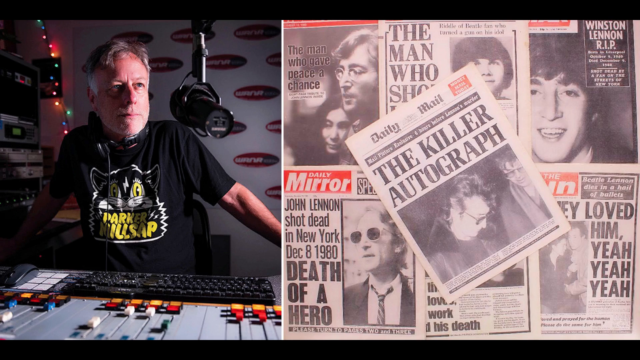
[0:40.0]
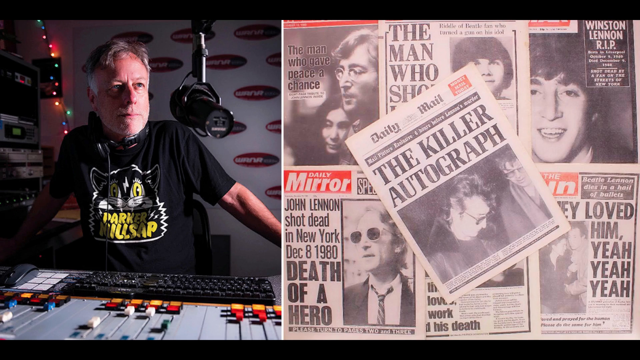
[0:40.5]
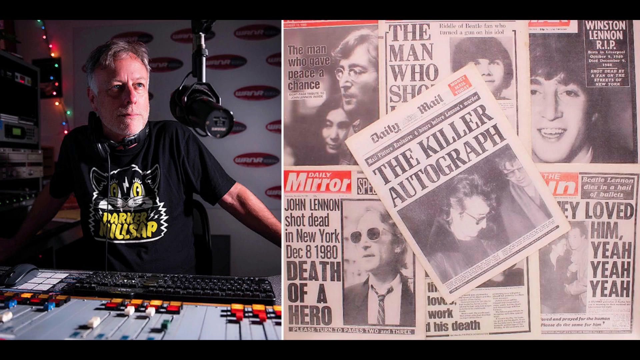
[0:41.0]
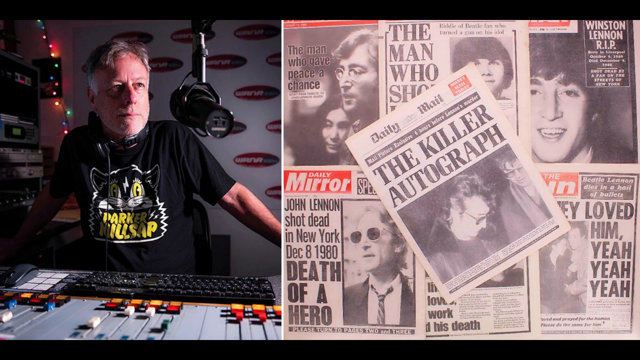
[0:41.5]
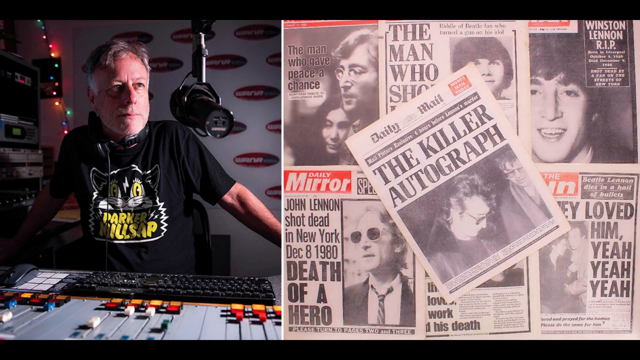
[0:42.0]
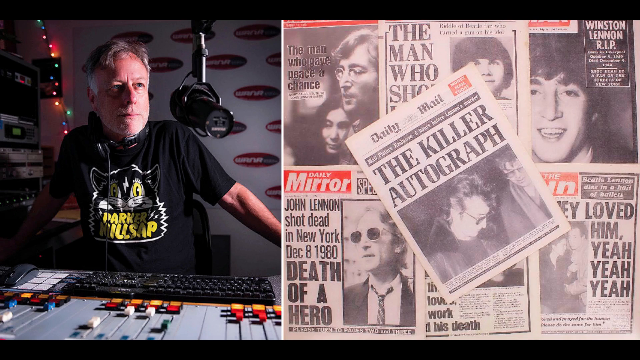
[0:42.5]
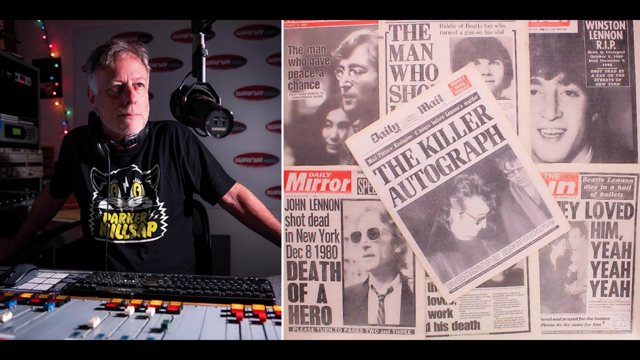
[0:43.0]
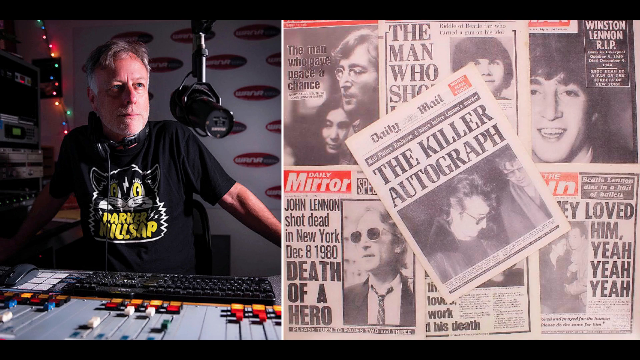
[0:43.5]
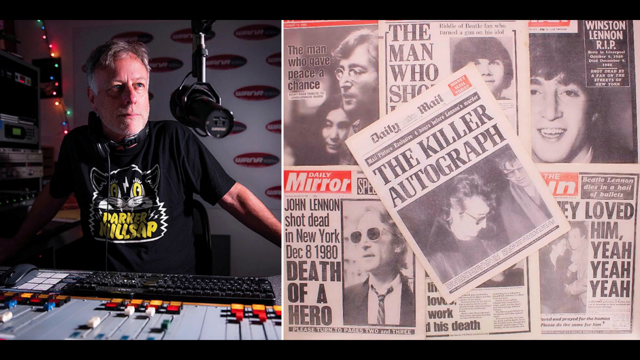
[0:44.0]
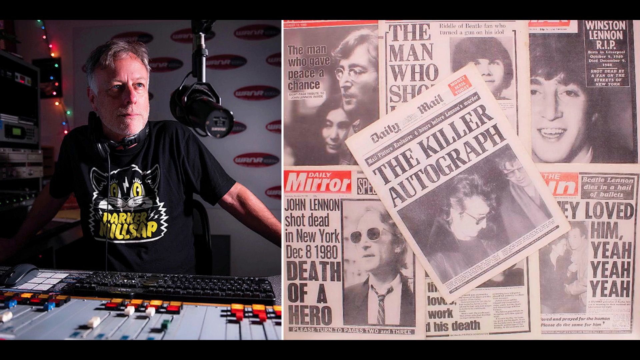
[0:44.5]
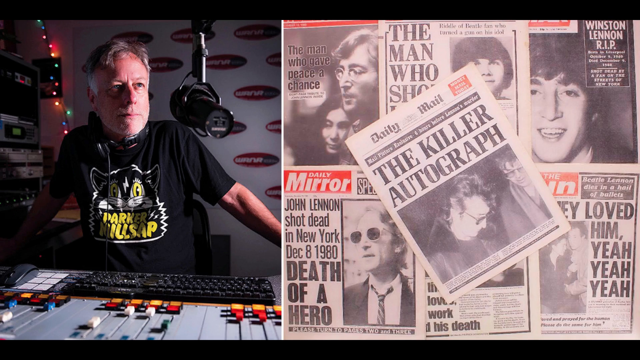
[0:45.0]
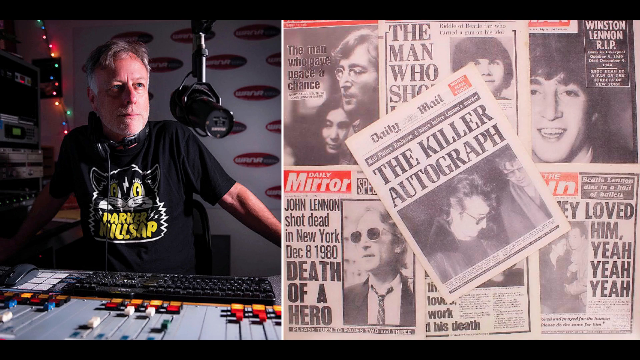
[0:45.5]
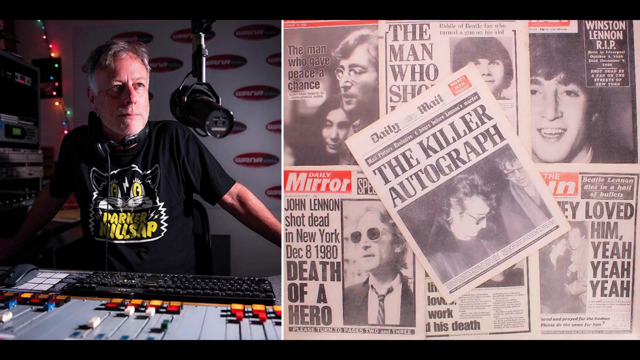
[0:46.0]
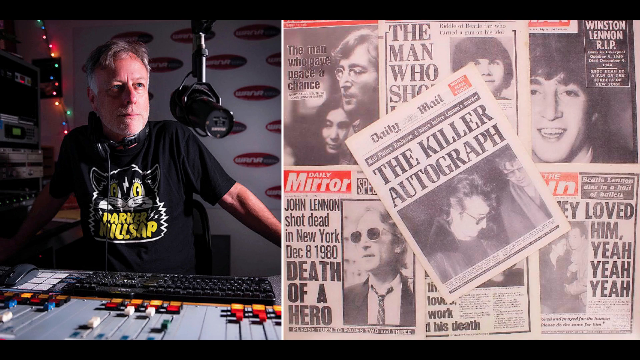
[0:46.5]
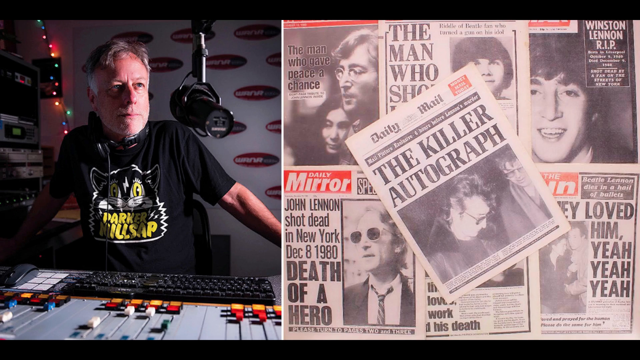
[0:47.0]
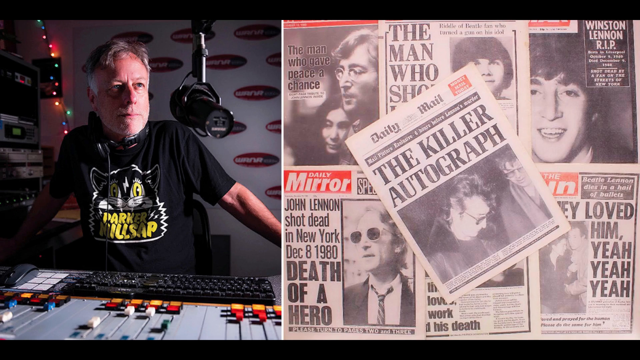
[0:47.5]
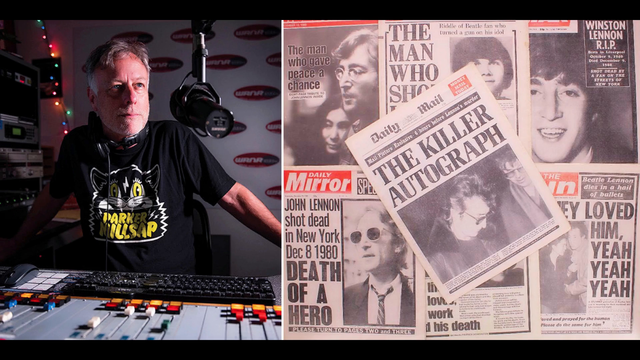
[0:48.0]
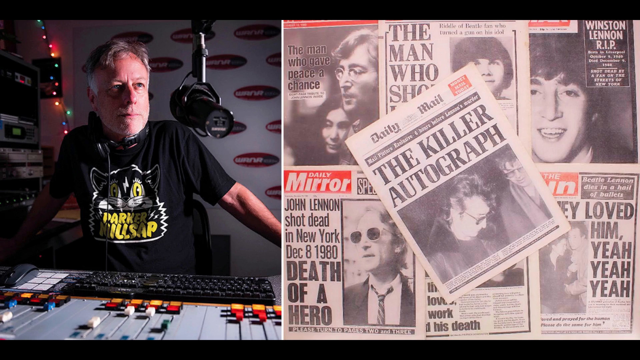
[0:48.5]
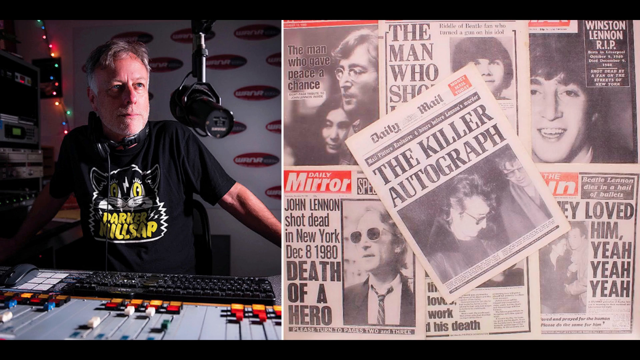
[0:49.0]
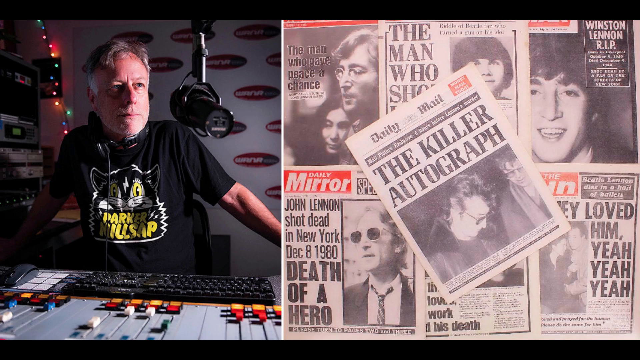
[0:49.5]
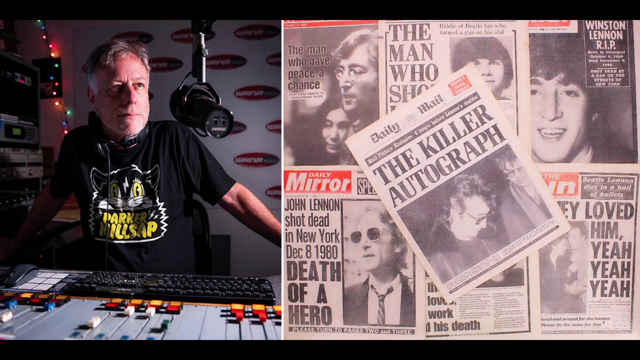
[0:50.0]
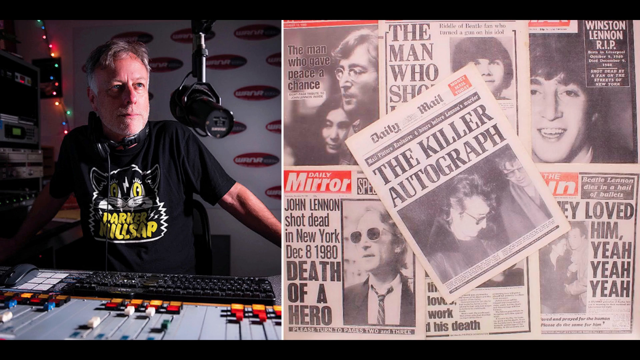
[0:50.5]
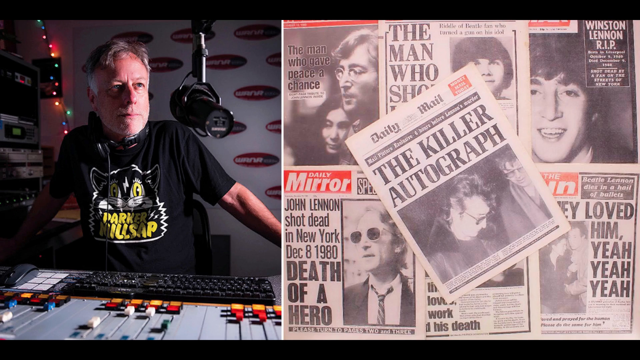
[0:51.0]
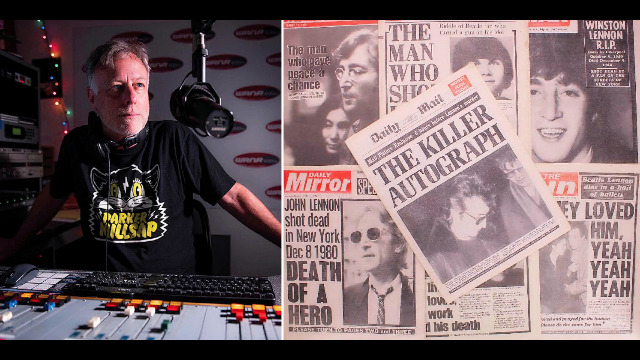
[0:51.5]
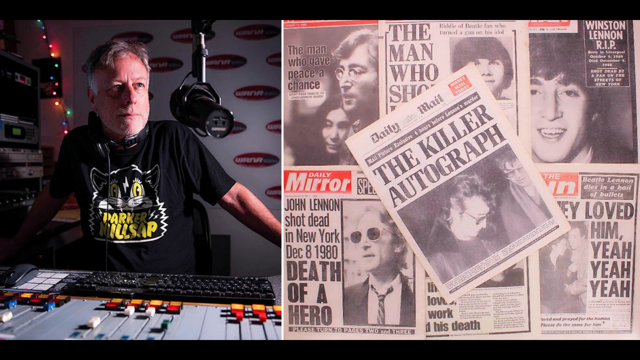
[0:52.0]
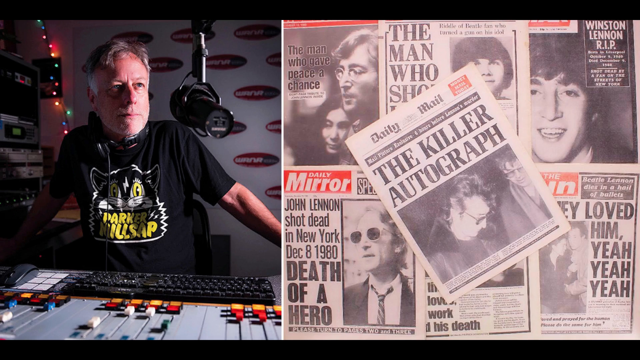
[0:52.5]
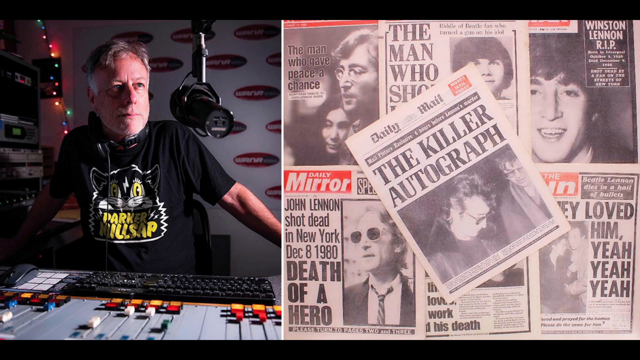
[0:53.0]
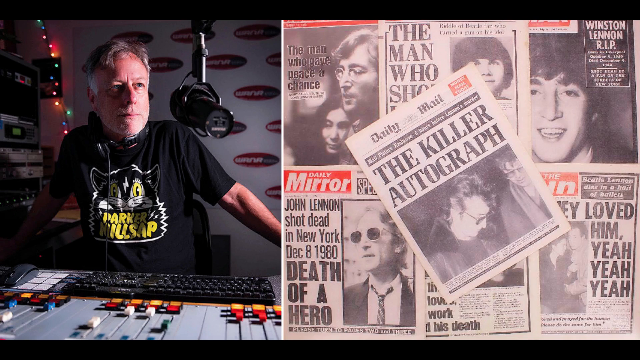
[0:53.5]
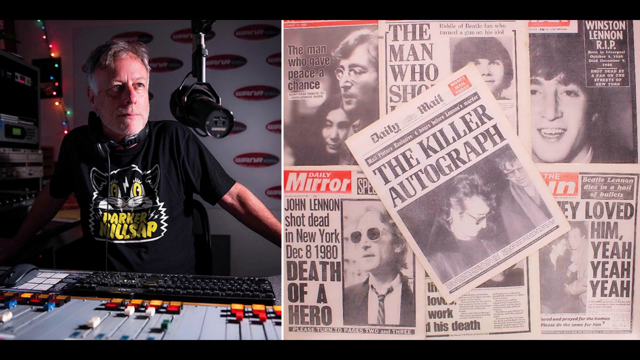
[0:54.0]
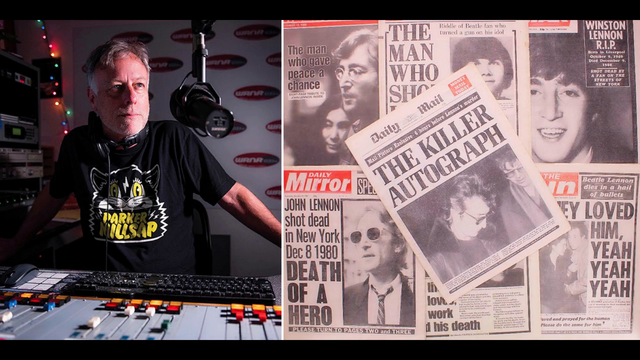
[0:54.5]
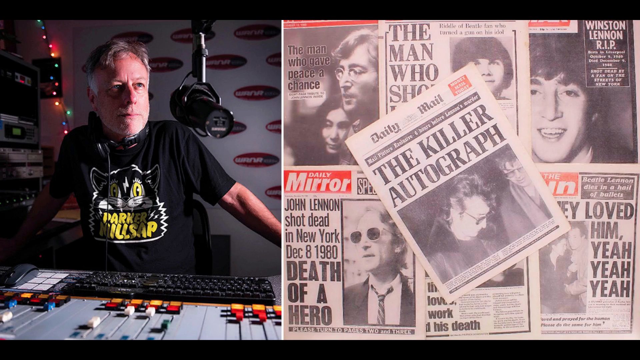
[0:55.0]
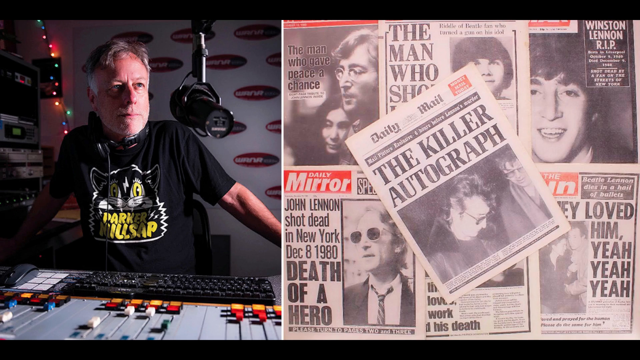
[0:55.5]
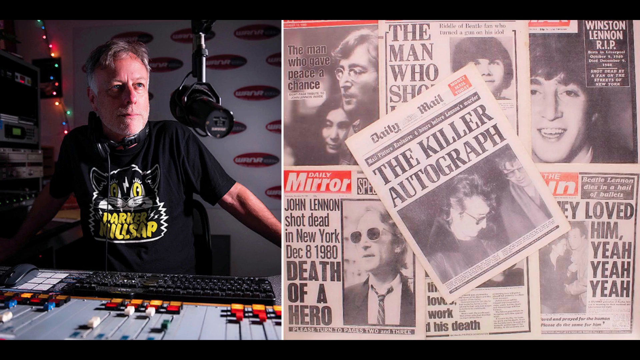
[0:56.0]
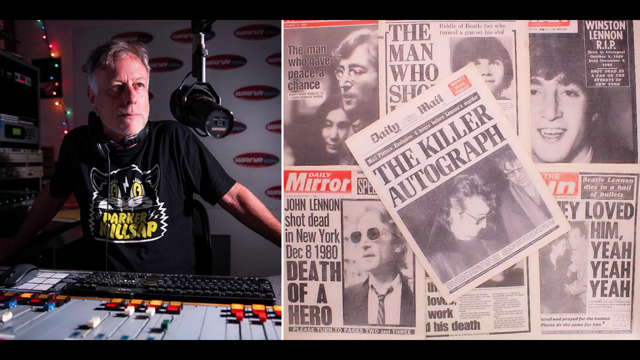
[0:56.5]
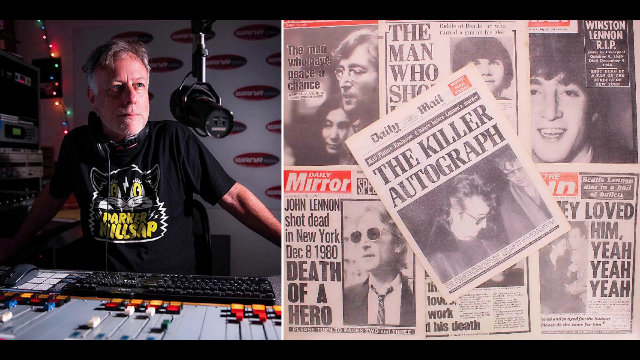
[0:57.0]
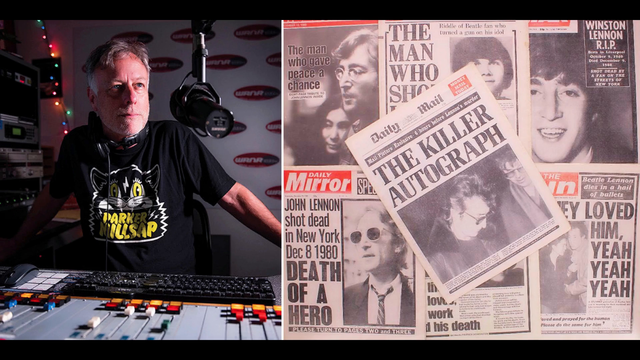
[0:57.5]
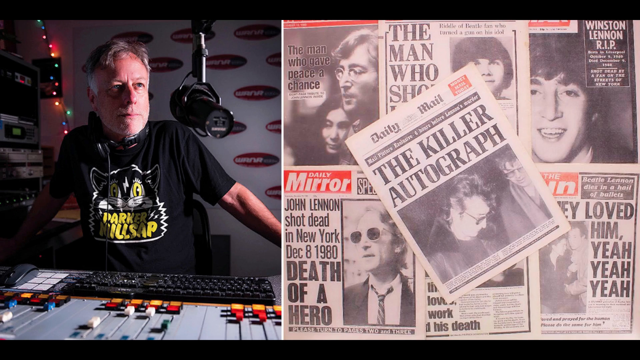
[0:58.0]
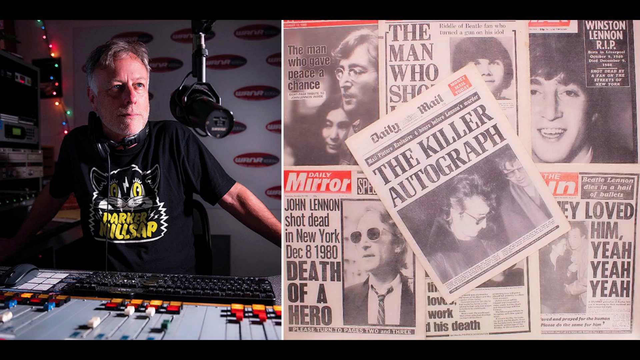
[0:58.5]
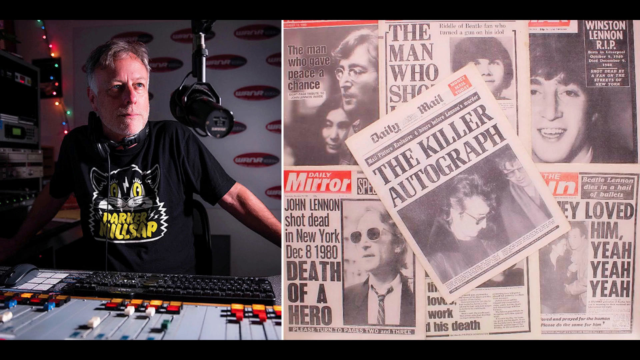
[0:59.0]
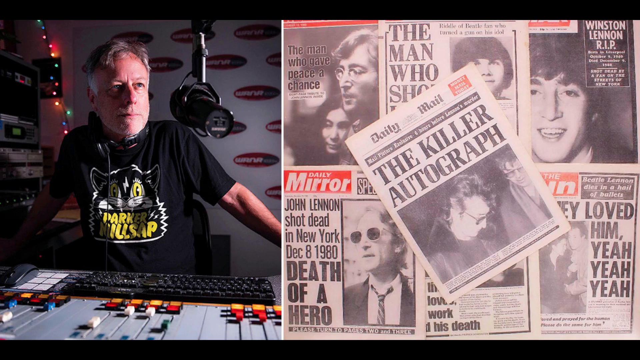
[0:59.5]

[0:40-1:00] The same split-screen image continues, with the radio disc jockey sitting in his DJ booth on the left and the seven newspapers on the right: six laid flat in a kind of two-by-three grid, with a seventh resting on top at a slanted angle. On the bottom row, starting from the left, one paper has the word "mirror" in white text in a red box, with a smaller word above it reading "daily", so the paper is apparently the Daily Mirror. The body of this paper is split in half: on the left, text reads "John Lennon shot dead in New York, December 8, 1980, death of a hero", and to the right of that text is an image of John Lennon in a suit, wearing circular sunglasses. The newspaper next to it is covered by the slanted paper on top, so nothing can really be seen. The last newspaper on the far right of the bottom row is partially obscured, but the text "They loved him. Yeah, yeah, yeah." can be made out in big black letters. The words "they loved" go across the entire top portion, "him" is on one line to the left of the image on the paper, and "yeah, yeah, yeah" is in consecutive rows underneath. To the left of this text is a blurred image of what looks to be a man and a woman; the man wears a light-colored shirt and the woman wears some kind of buttoned dark-colored shirt. In the top left corner of this paper is a red box with white text, apparently "the sun", with half the words obscured by the newspaper on top.